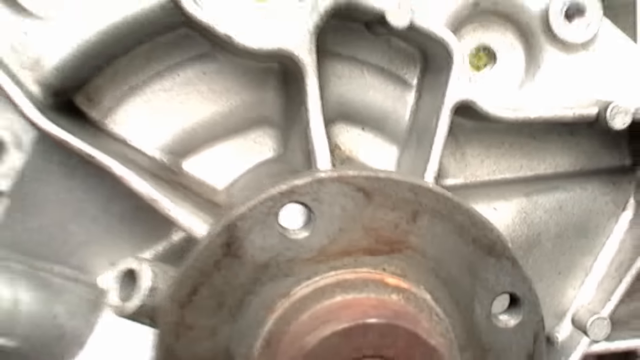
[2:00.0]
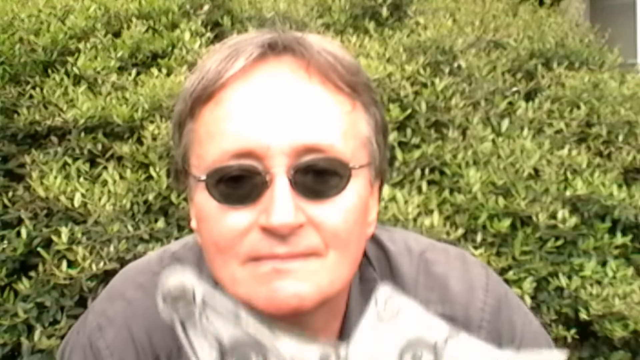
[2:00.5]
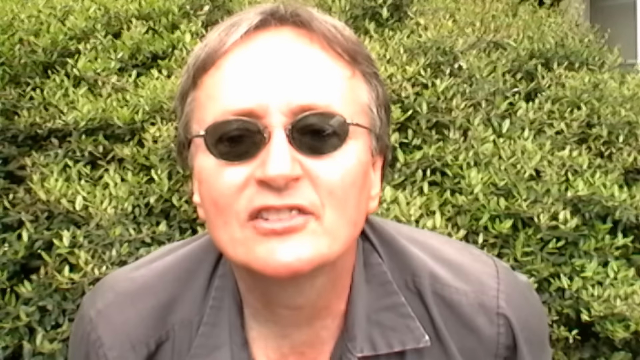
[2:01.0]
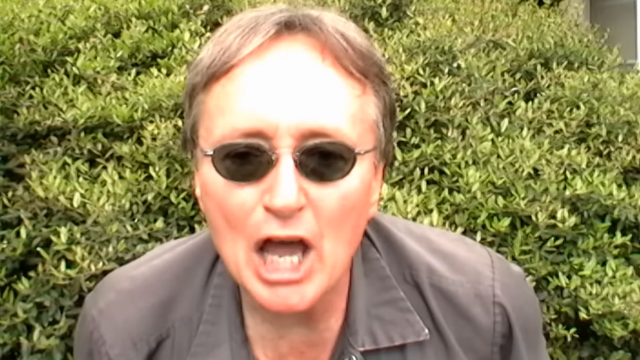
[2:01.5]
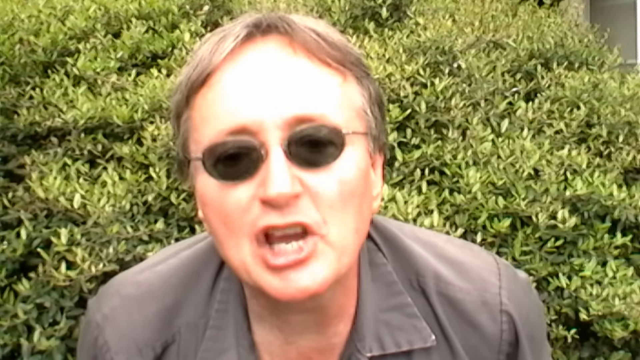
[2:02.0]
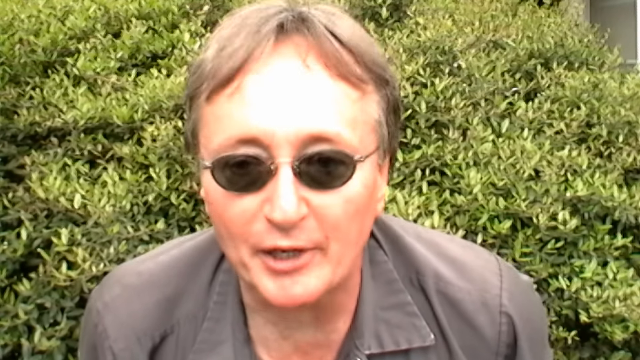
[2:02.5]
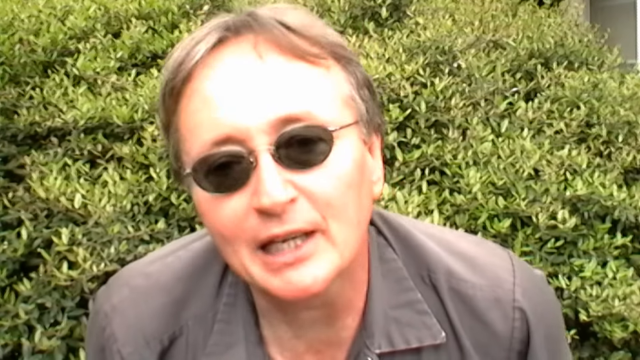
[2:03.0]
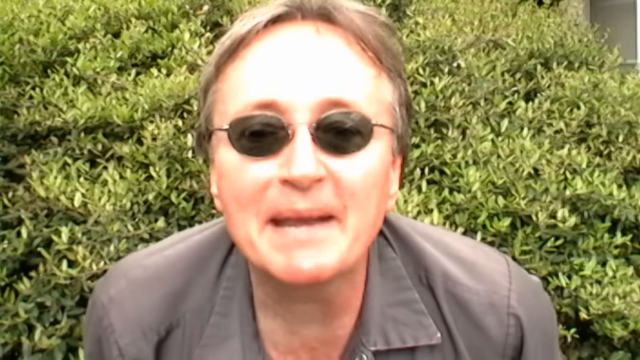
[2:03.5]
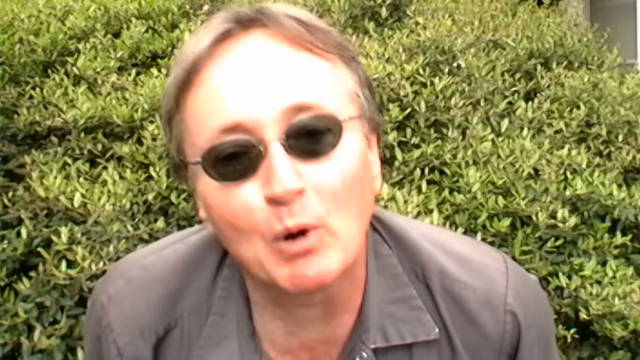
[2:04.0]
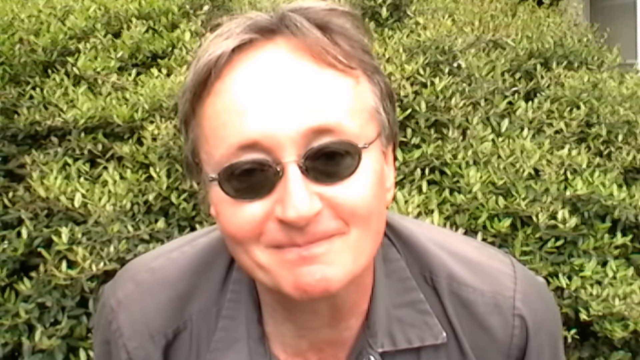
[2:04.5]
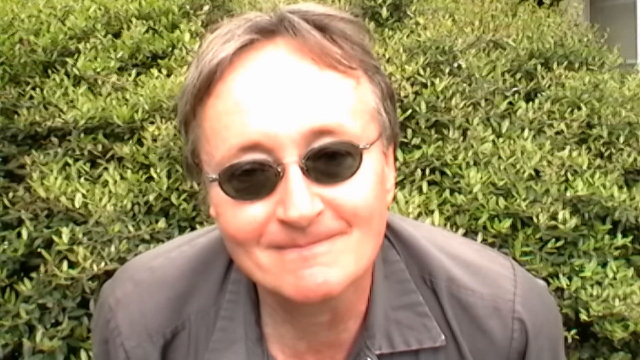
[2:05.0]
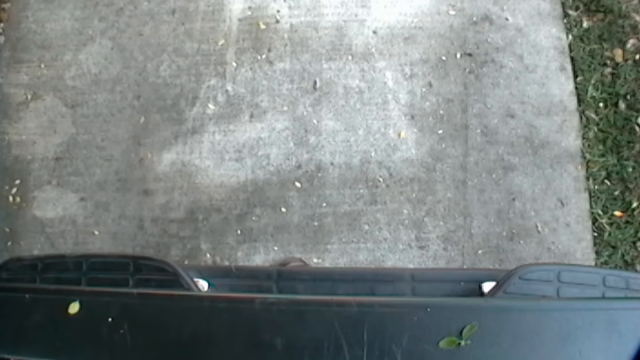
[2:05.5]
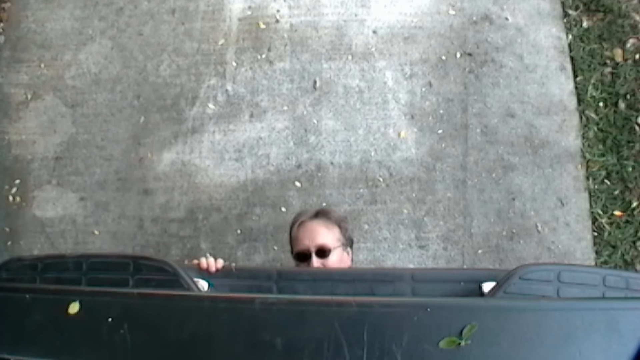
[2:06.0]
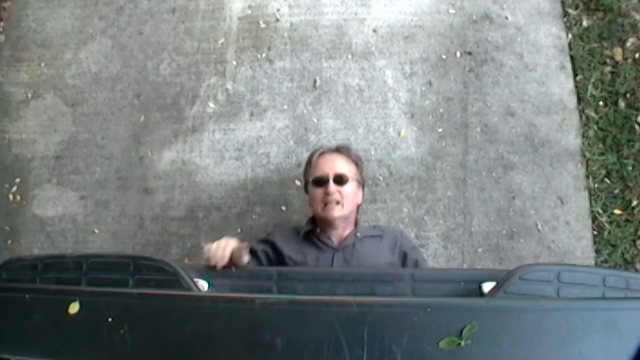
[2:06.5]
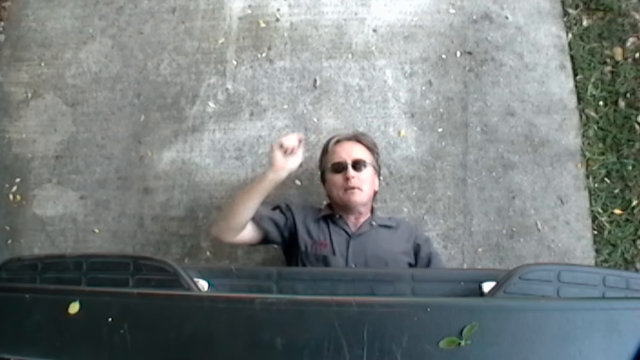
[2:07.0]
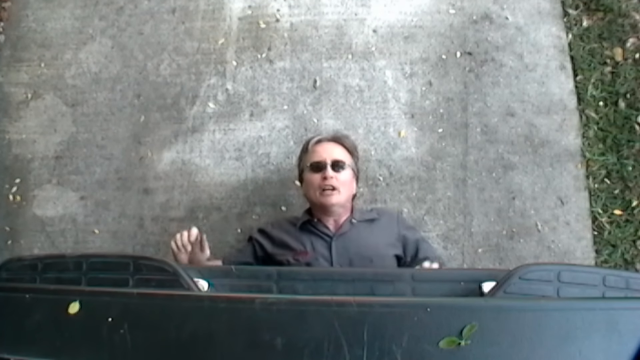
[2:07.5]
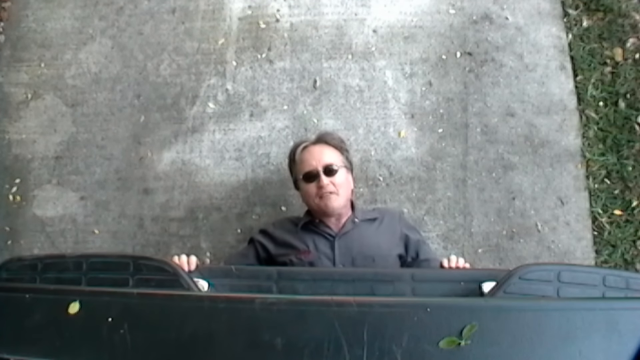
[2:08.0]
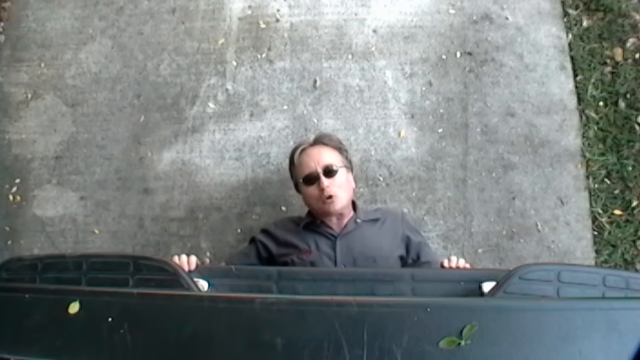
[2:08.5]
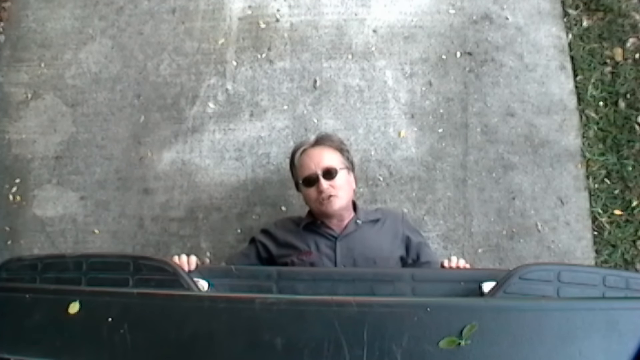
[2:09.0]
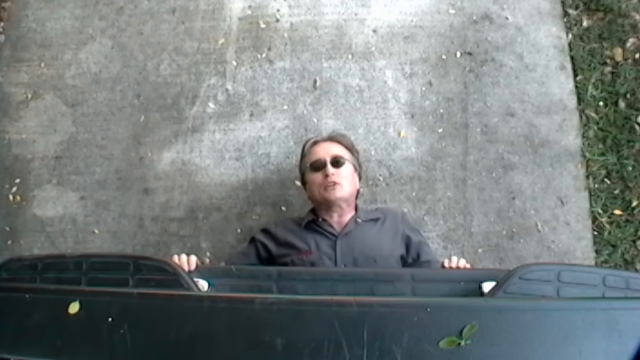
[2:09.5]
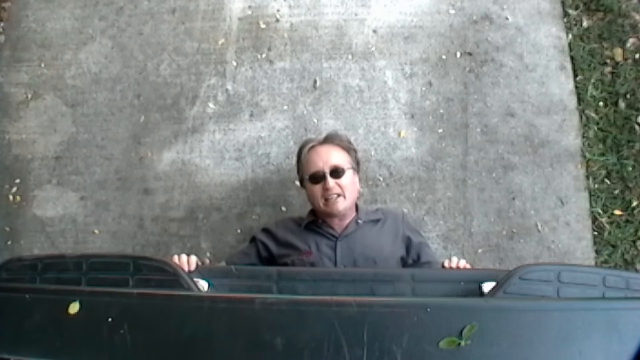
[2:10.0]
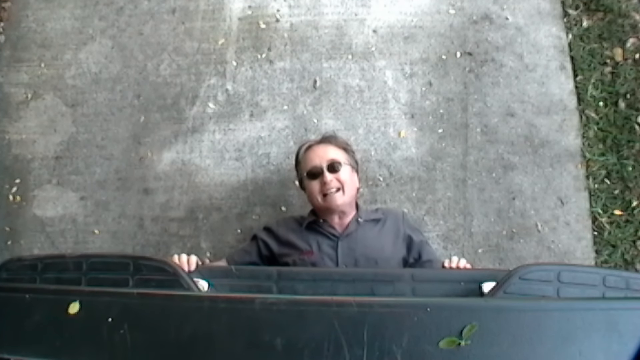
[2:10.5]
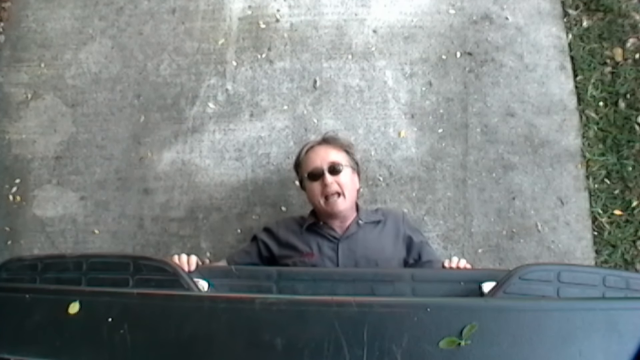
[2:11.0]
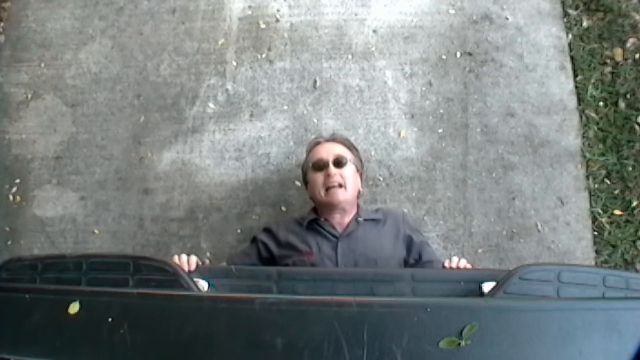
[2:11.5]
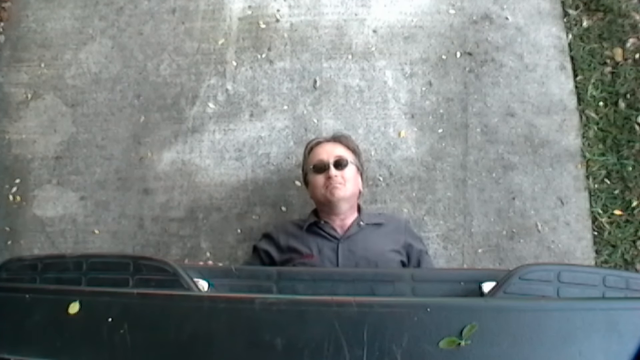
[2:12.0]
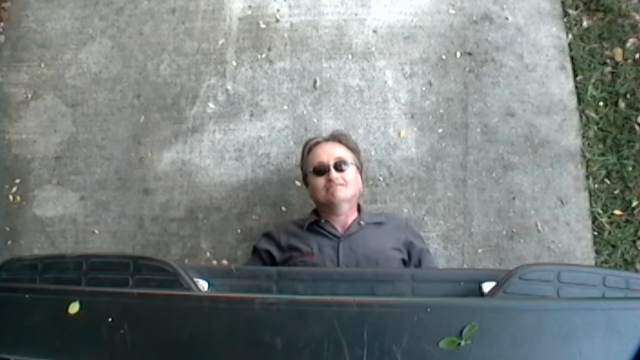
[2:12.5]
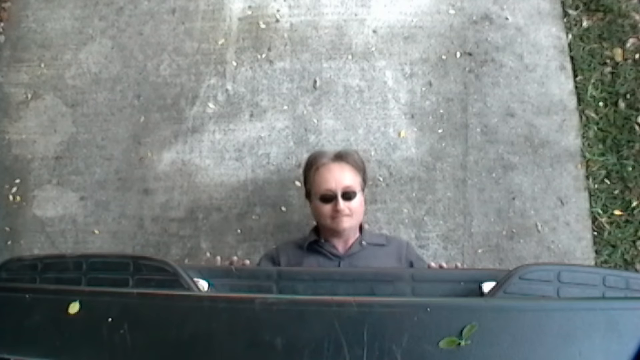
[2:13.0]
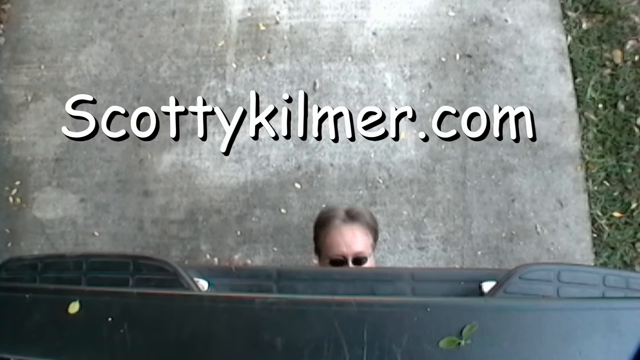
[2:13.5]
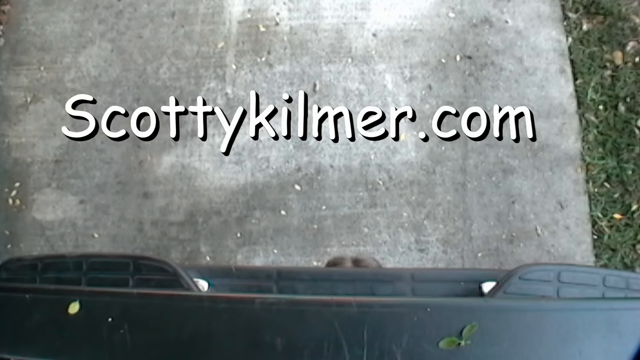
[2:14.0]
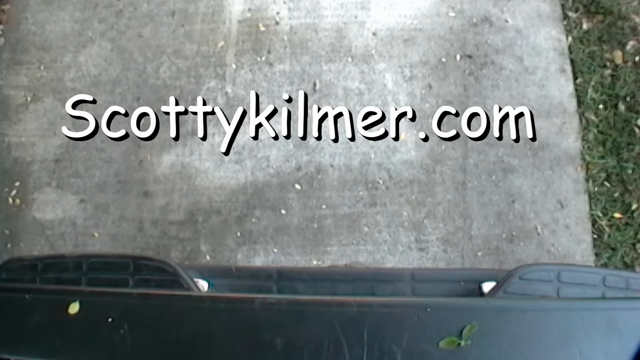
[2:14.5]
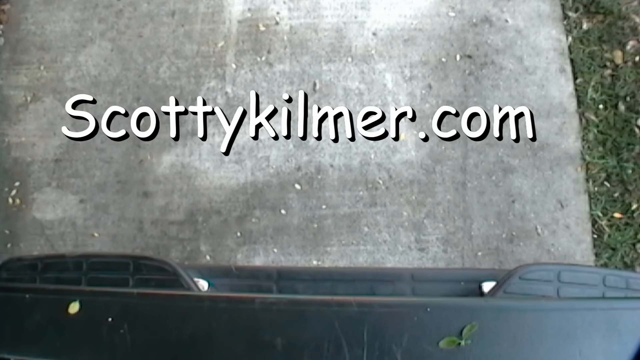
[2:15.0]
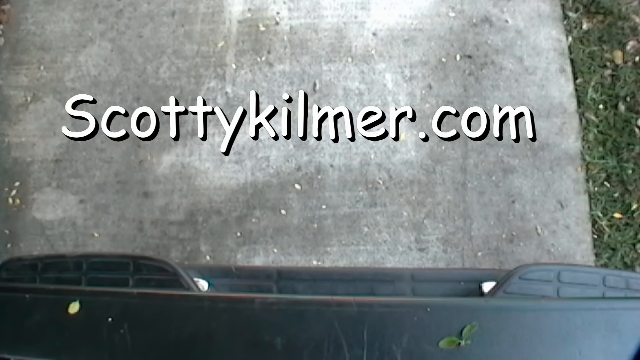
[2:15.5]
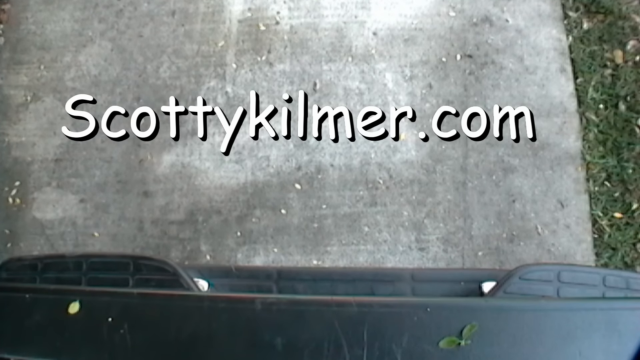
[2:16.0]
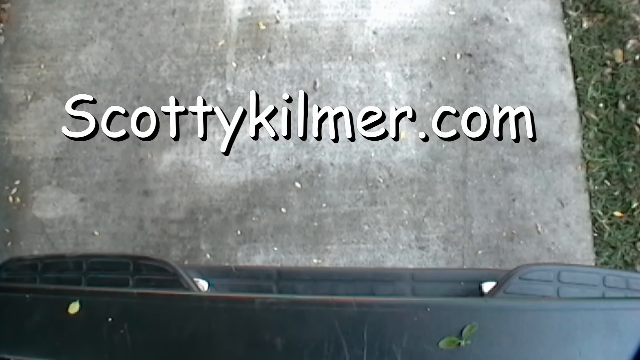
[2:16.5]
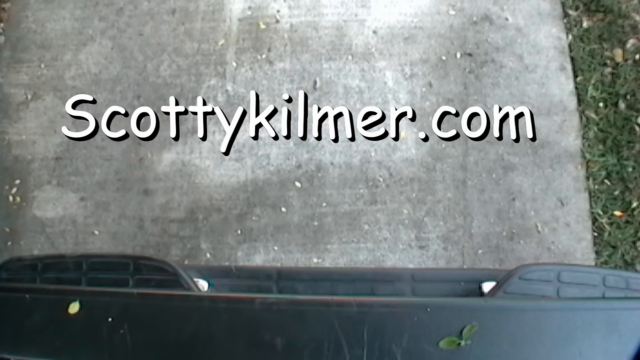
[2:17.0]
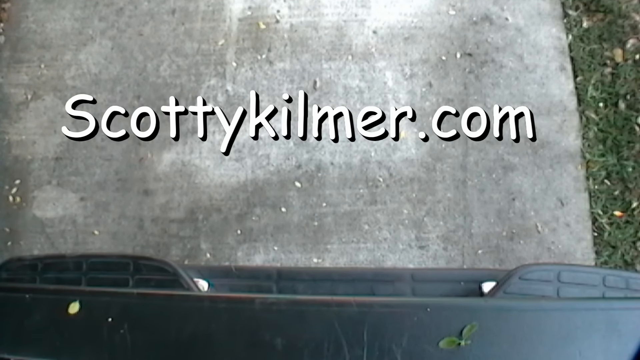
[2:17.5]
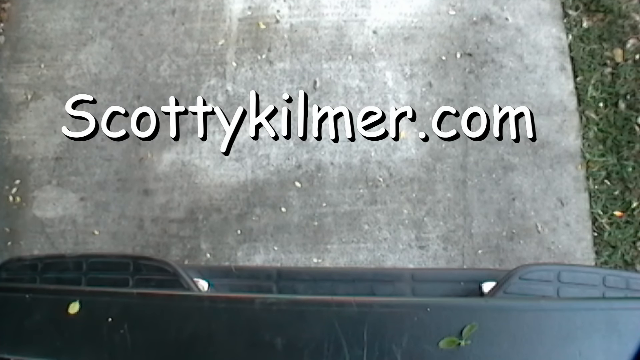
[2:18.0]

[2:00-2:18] A man holds up a silver engine piece in front of his face, then lowers it and talks to the camera. He wears dark glasses and a gray button-up shirt and has grayish brown hair, and he stands in front of what looks like a green tree or plant. The video then cuts to him sliding out from under a car, lying on concrete and talking directly into the camera, almost as if yelling. He slowly slides back under the vehicle until he is no longer visible. The vehicle itself is not visible except for a black bumper that almost looks like a truck bumper. A new screen then appears reading "SCOTTYKILMER.COM" in white lettering.